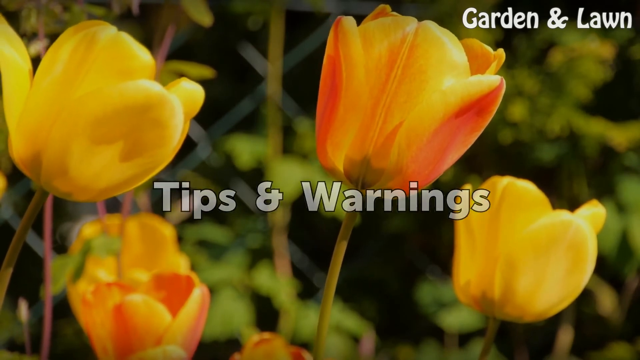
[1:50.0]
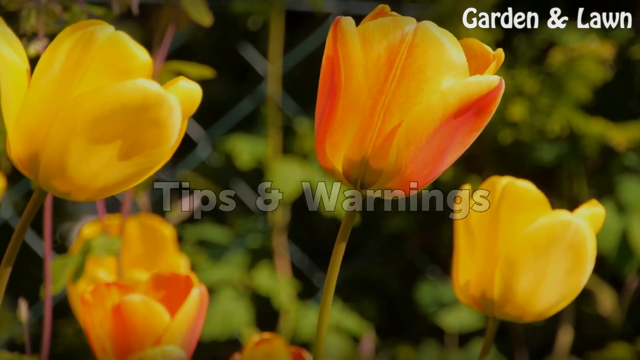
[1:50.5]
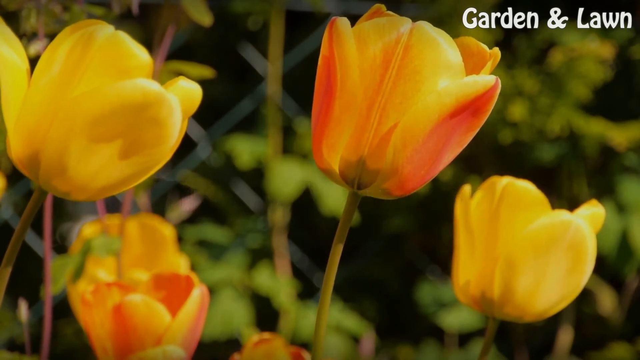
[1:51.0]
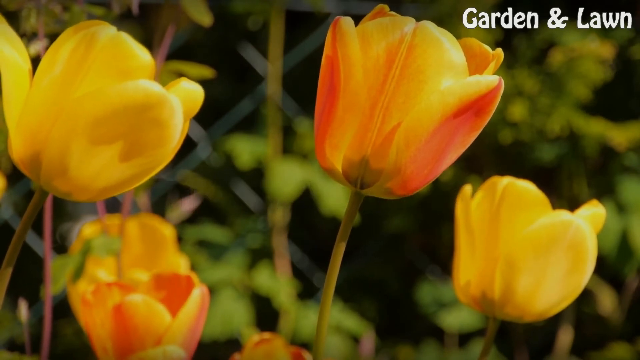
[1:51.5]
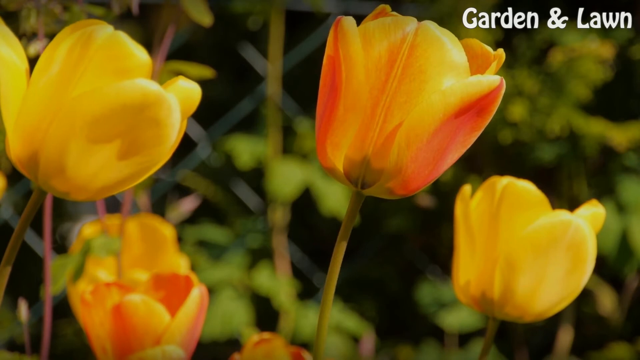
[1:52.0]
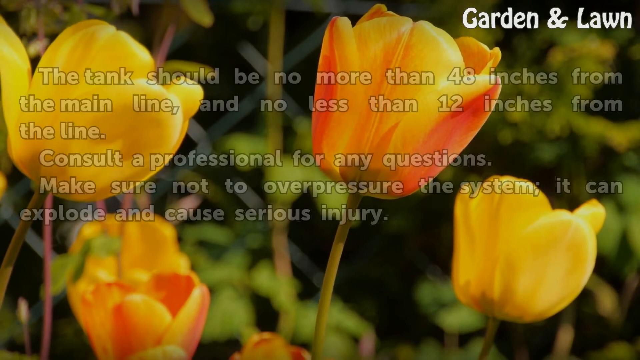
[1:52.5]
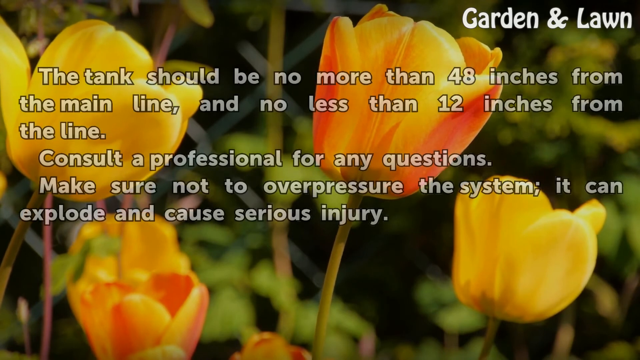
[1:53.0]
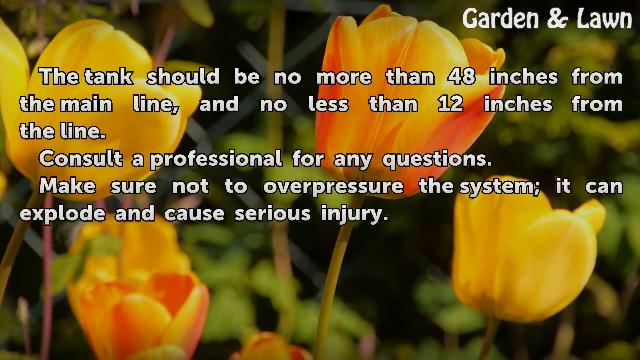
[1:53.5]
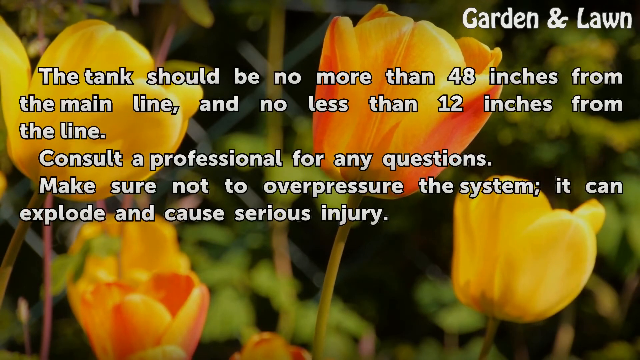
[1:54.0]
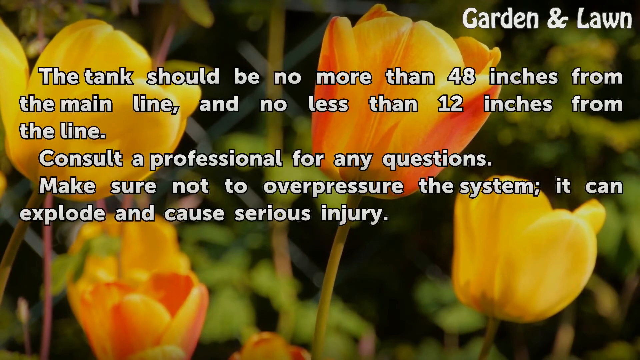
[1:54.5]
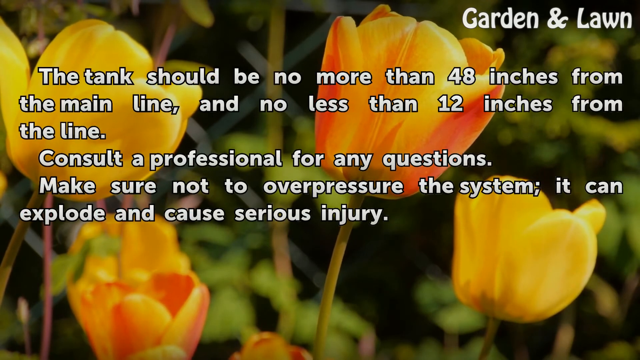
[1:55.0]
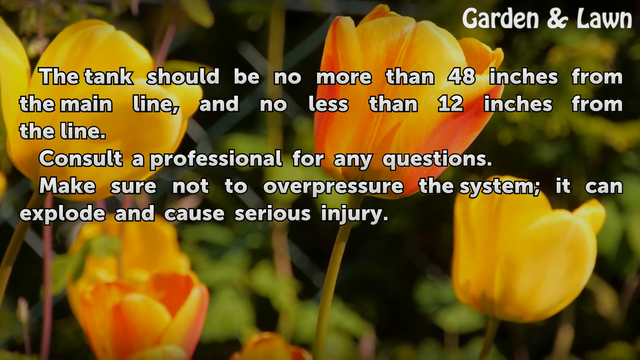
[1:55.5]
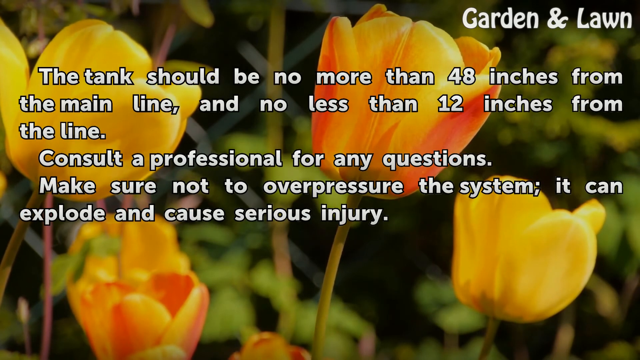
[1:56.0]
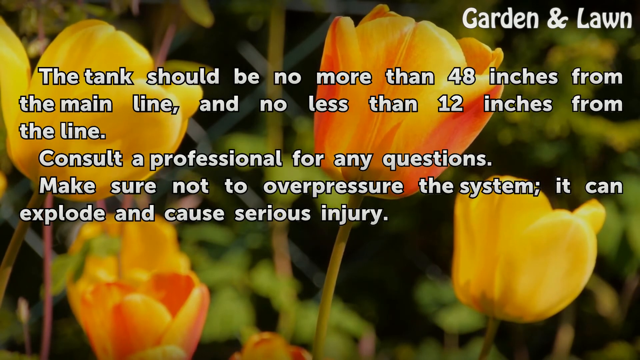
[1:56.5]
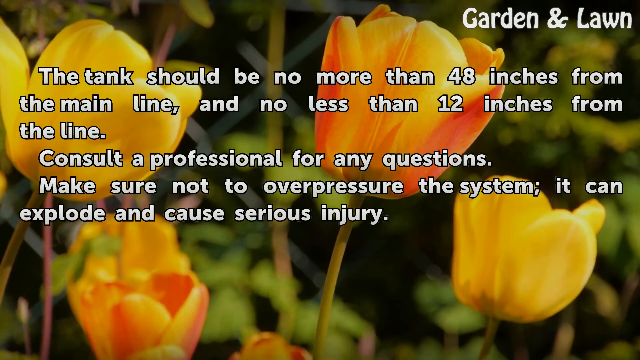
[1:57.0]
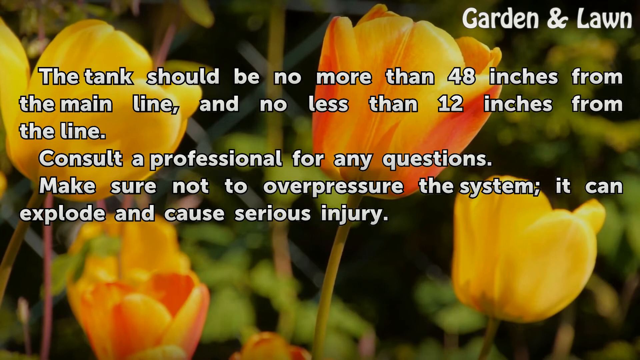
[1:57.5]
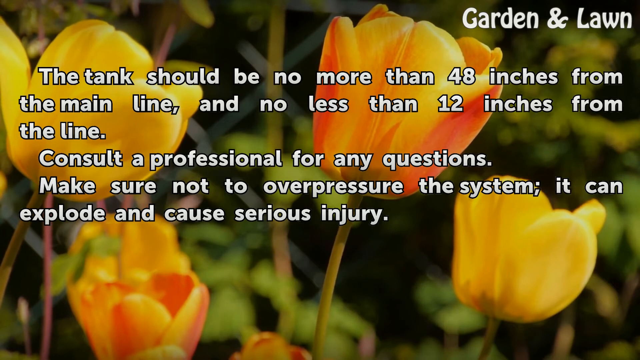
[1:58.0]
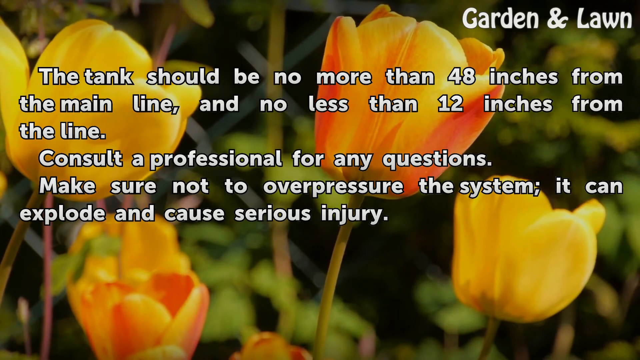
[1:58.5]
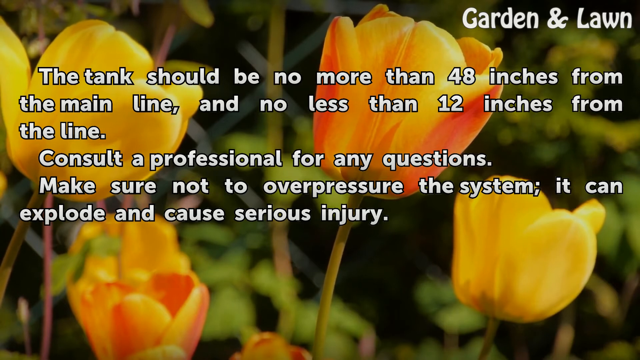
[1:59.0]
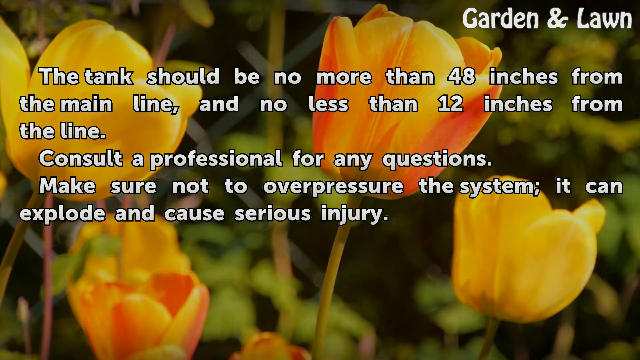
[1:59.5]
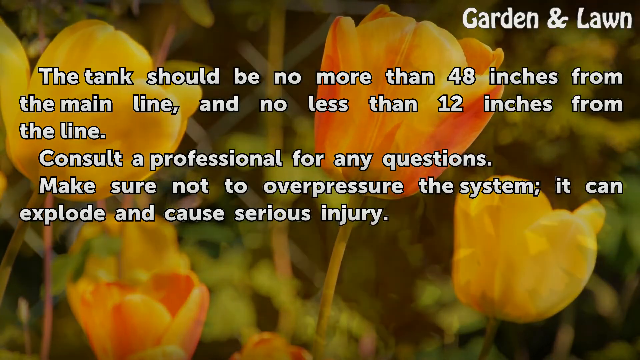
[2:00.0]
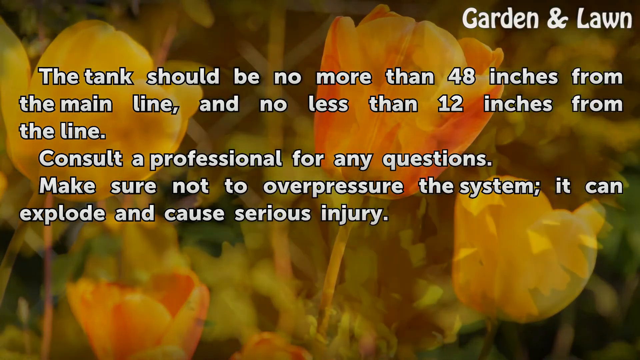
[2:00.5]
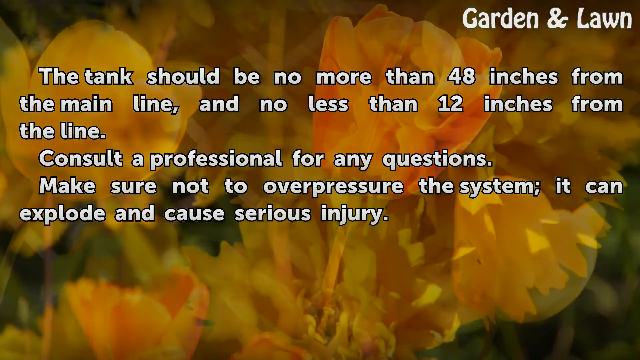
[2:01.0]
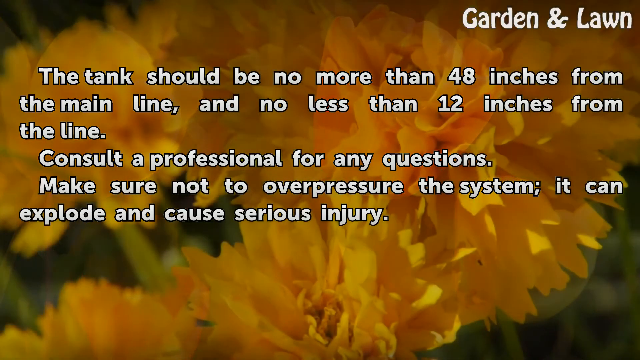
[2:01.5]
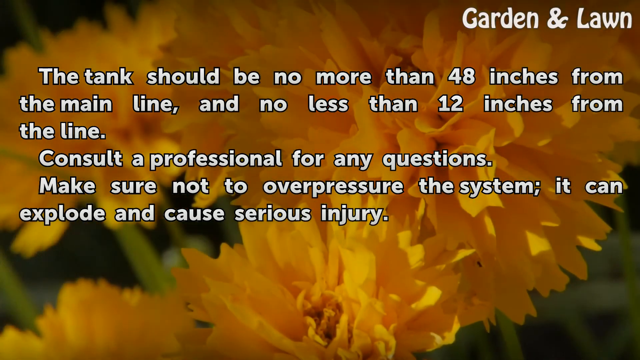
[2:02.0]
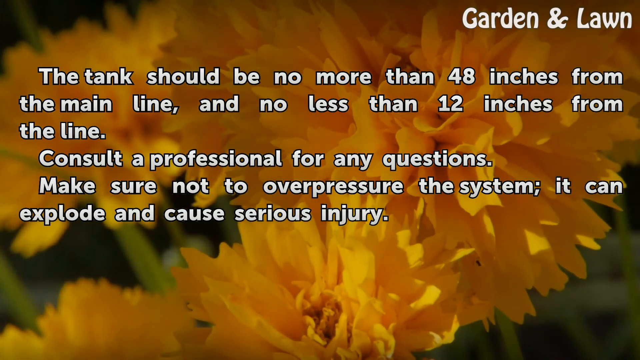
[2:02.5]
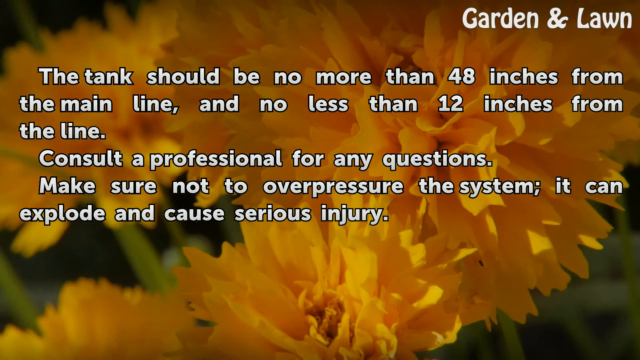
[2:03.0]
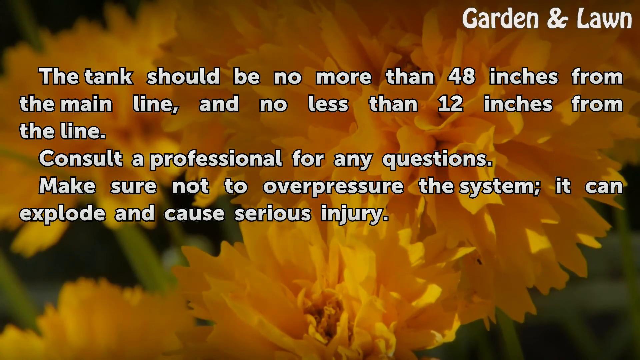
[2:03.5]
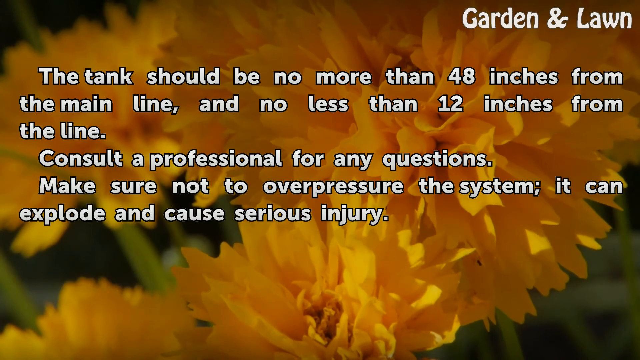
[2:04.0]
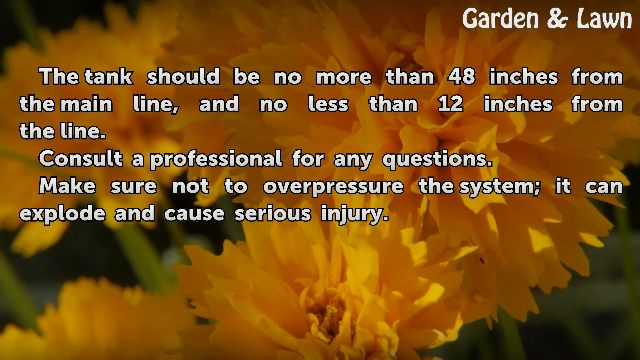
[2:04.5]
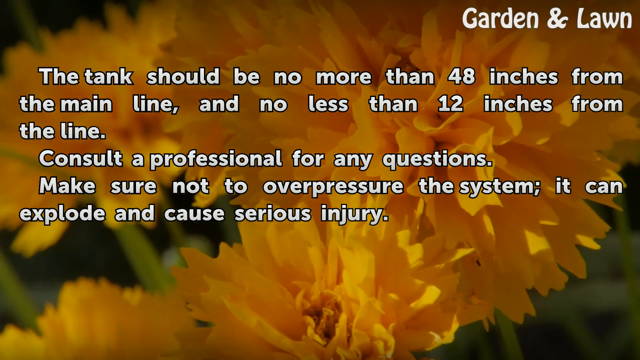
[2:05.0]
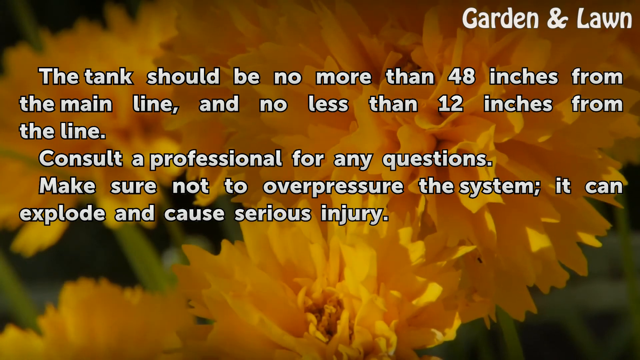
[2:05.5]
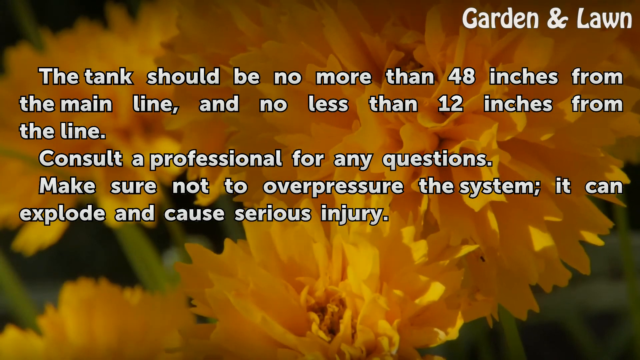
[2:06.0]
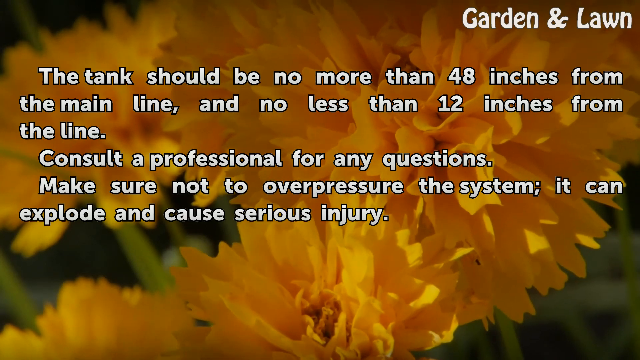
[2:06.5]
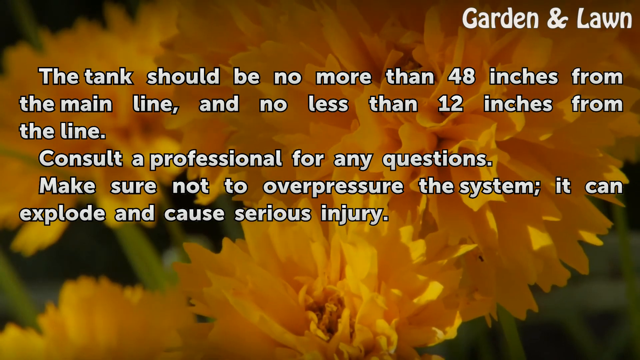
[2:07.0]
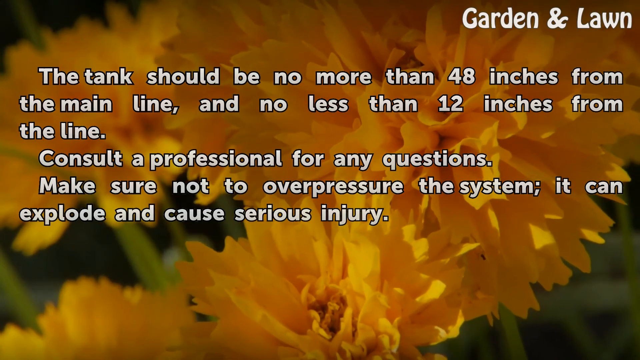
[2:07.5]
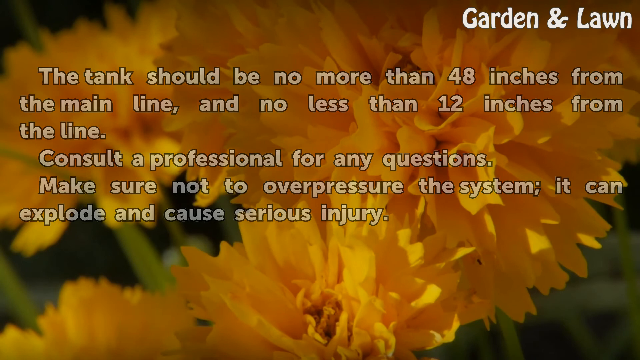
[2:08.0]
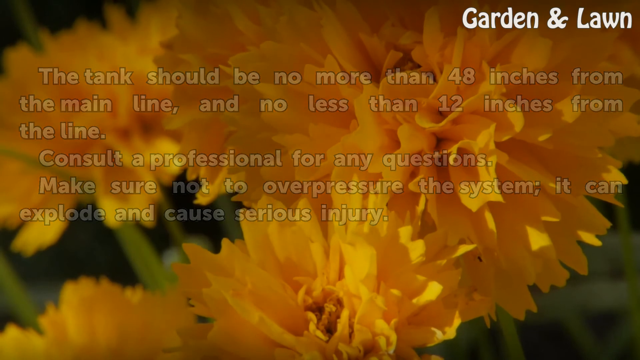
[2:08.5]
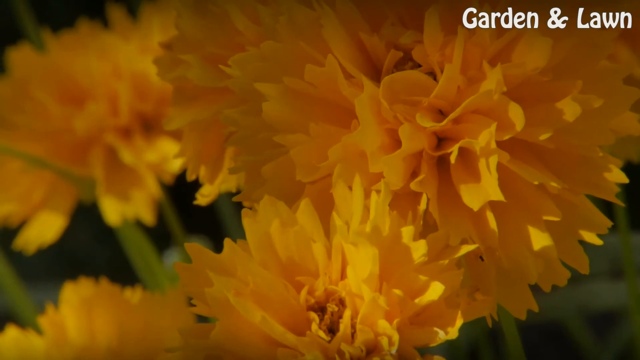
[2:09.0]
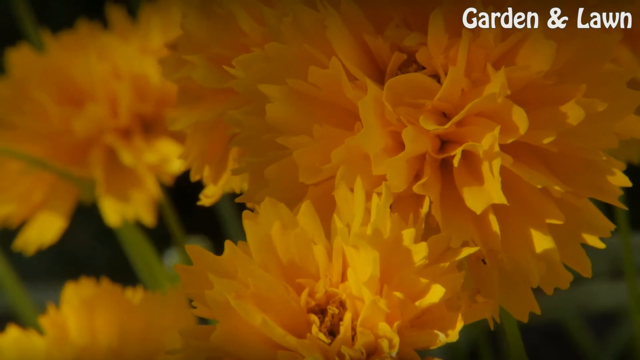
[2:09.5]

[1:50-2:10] Four yellow tulips on four flower stems sway in the breeze under the title "tips and warnings". A caption then comes on screen: "the tank should be no more than 48 inches from the main line and no less than 12 inches from the line. Consult a professional for any questions make sure not to over pressure the system it can explode and cause serious injury." The tulips are shown in close-up. One, nearest the right at the top of the screen, is slightly more orange than the others: it is mostly yellow in the center, with red and orange outer leaves to the left and right of the center. The tulips fade to a close-up of yellow chrysanthemums showing their spiky petals, which also sway in the breeze.